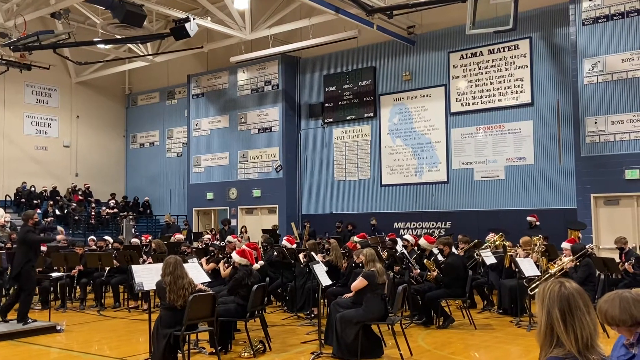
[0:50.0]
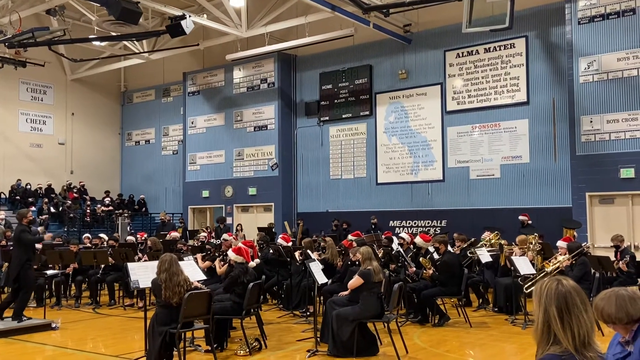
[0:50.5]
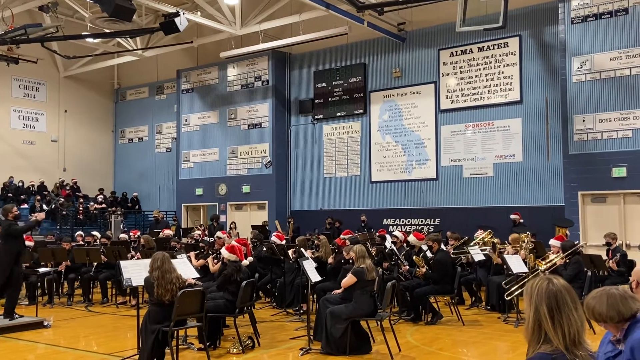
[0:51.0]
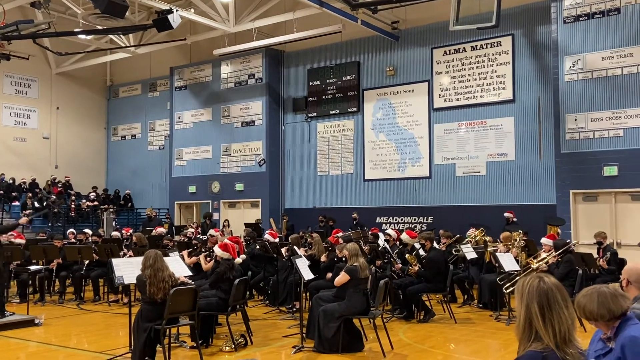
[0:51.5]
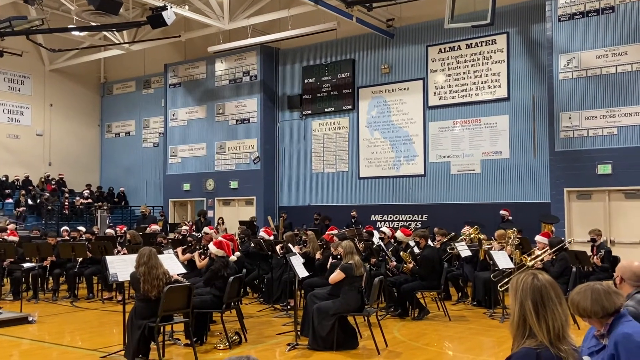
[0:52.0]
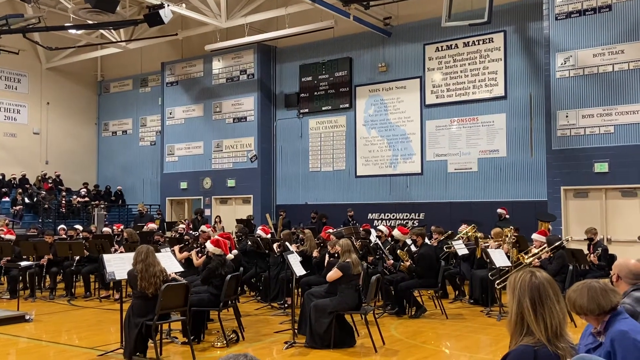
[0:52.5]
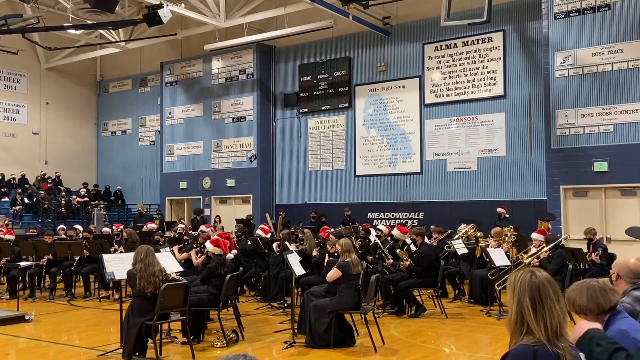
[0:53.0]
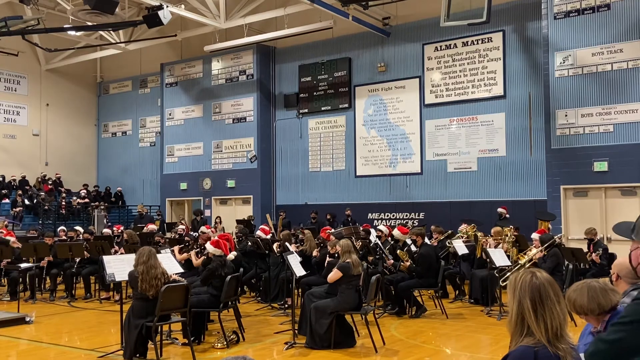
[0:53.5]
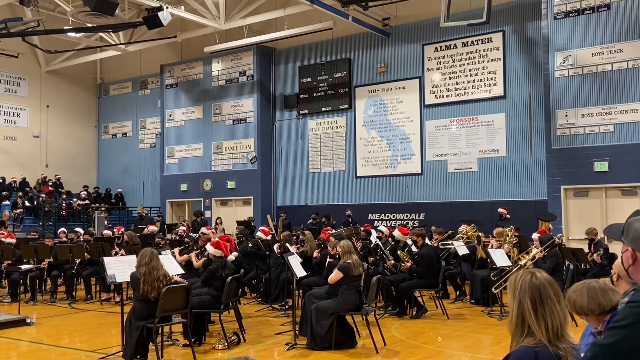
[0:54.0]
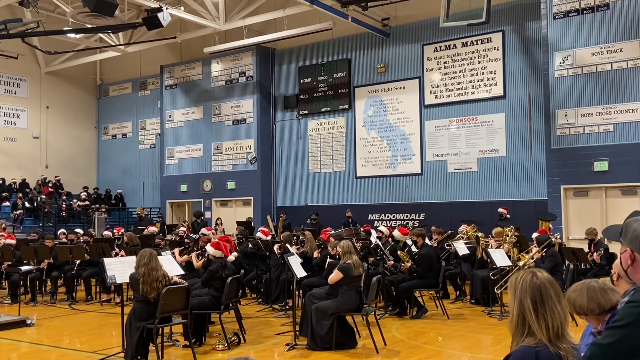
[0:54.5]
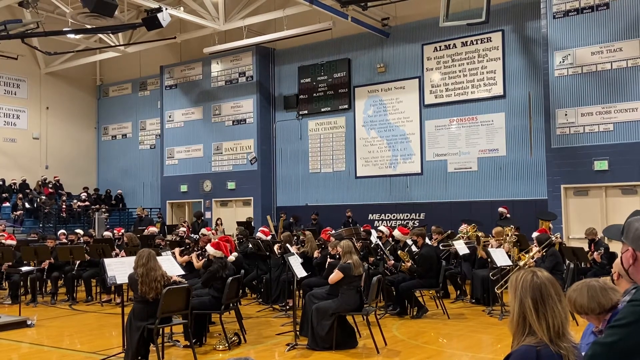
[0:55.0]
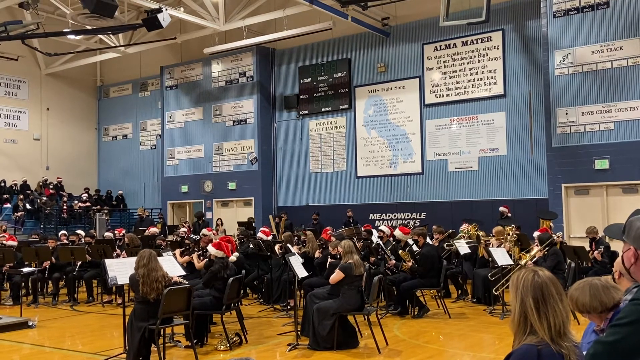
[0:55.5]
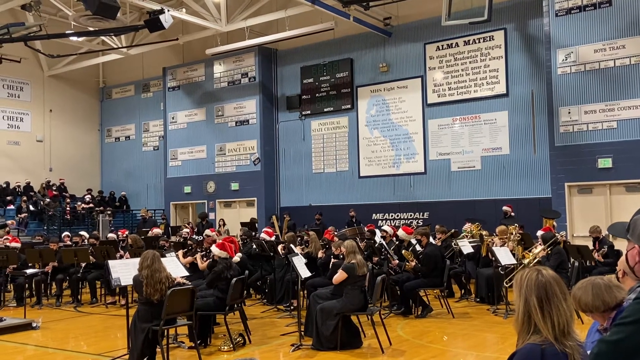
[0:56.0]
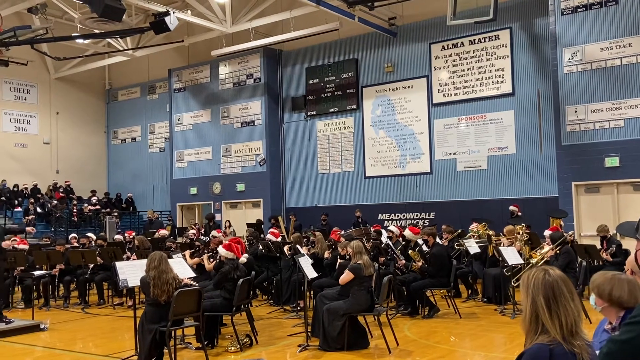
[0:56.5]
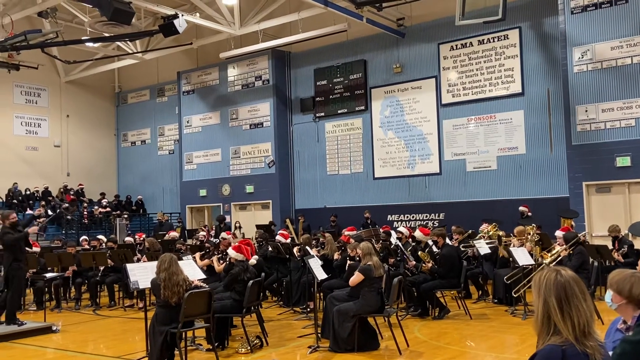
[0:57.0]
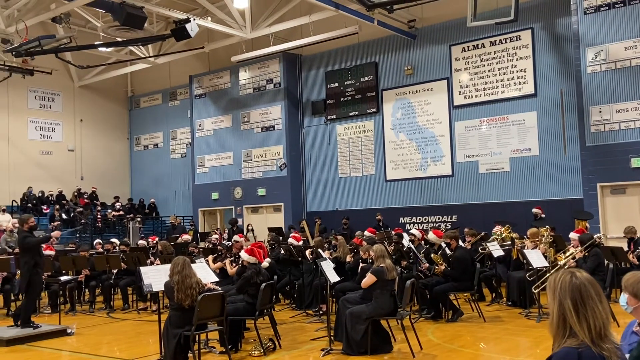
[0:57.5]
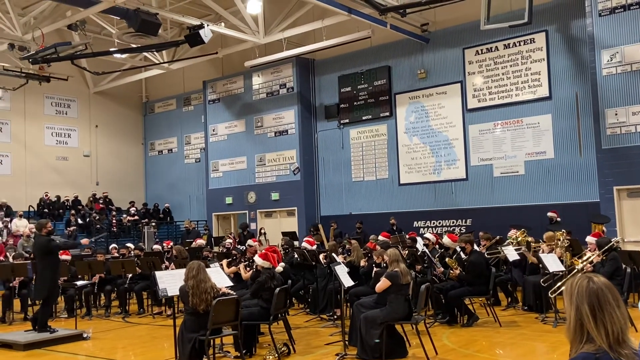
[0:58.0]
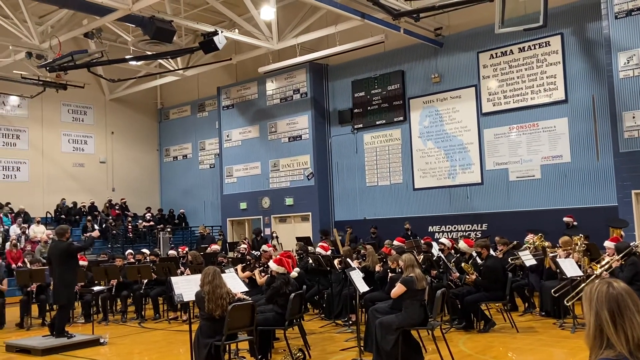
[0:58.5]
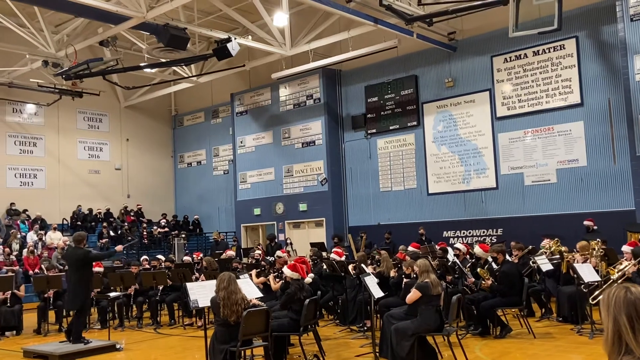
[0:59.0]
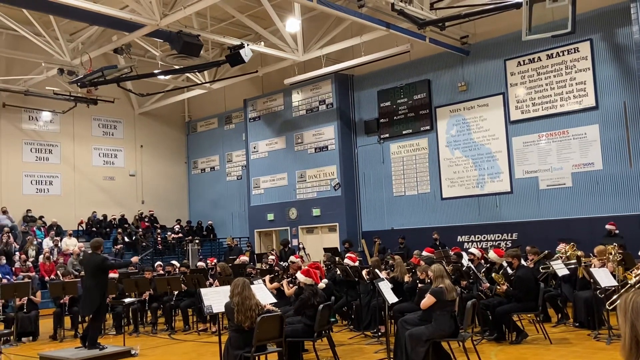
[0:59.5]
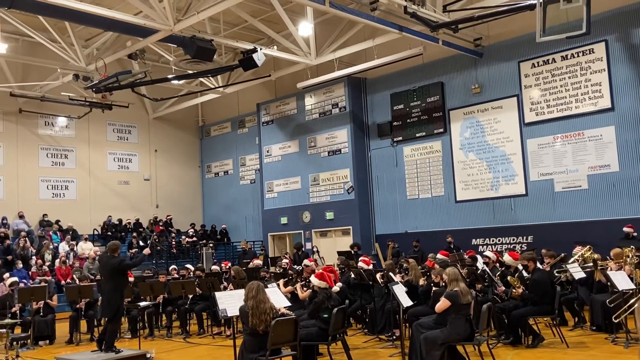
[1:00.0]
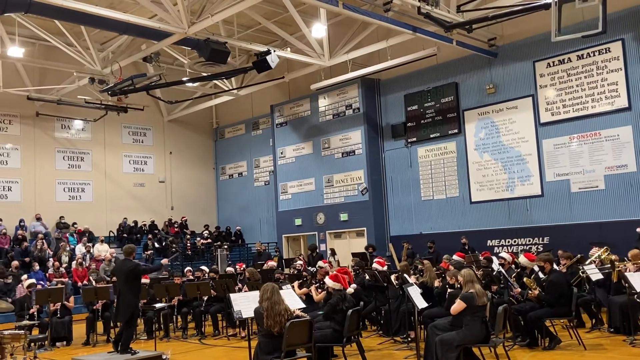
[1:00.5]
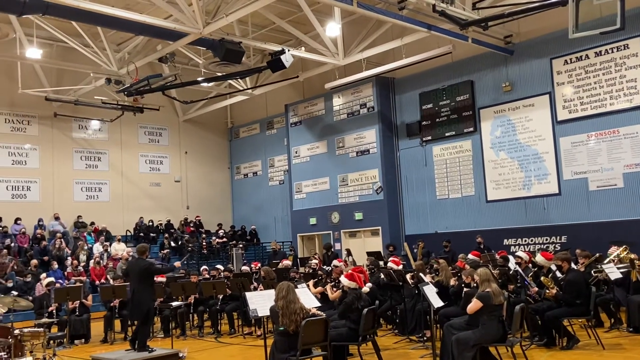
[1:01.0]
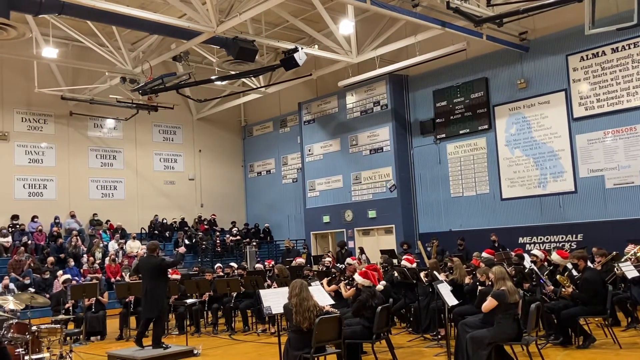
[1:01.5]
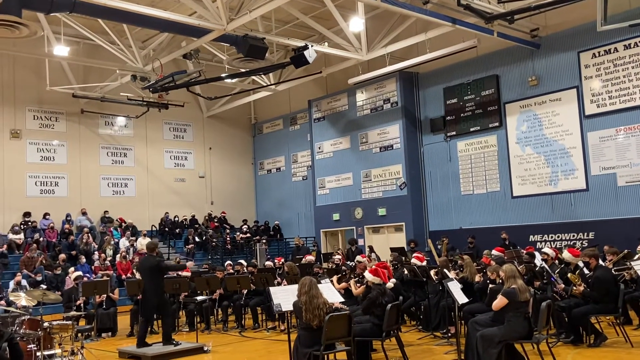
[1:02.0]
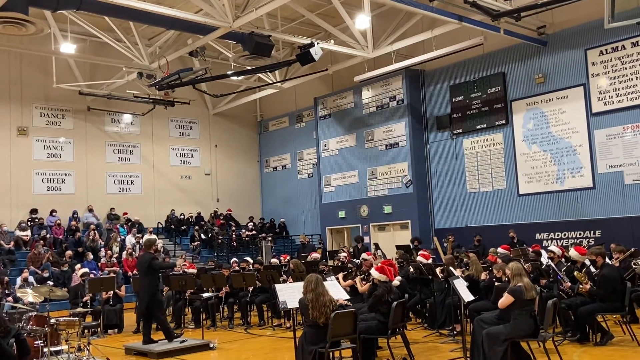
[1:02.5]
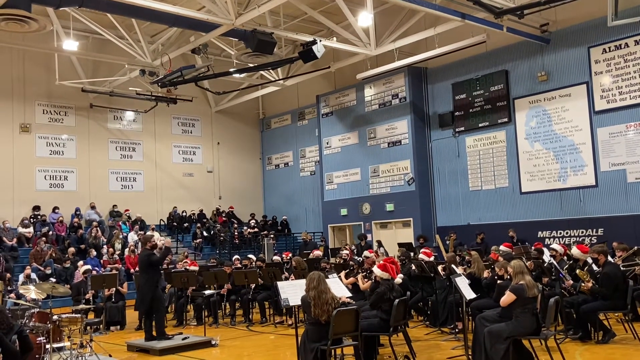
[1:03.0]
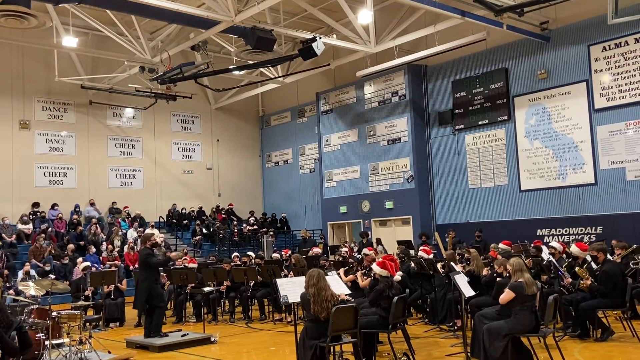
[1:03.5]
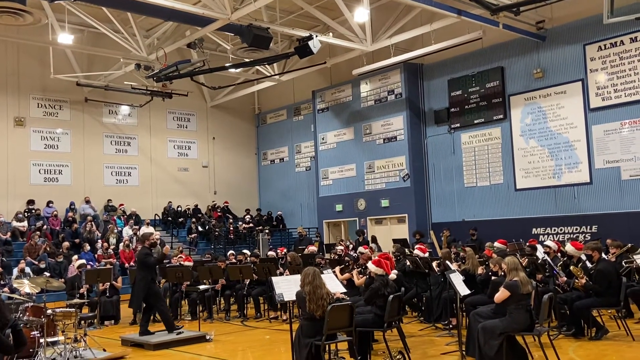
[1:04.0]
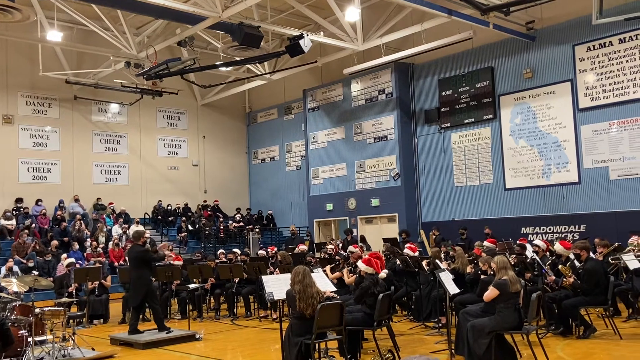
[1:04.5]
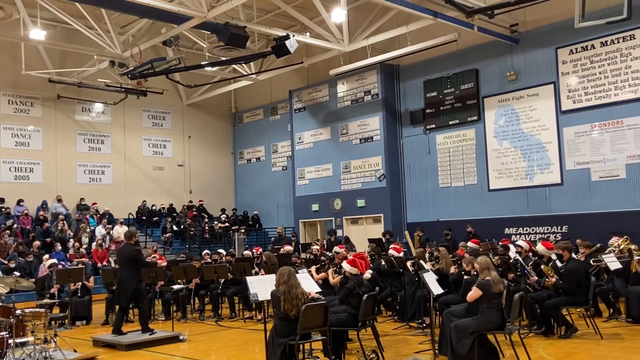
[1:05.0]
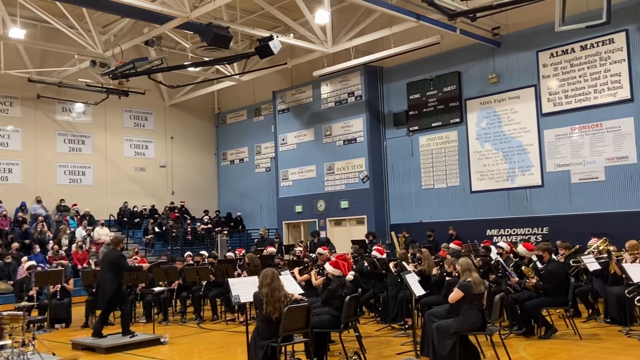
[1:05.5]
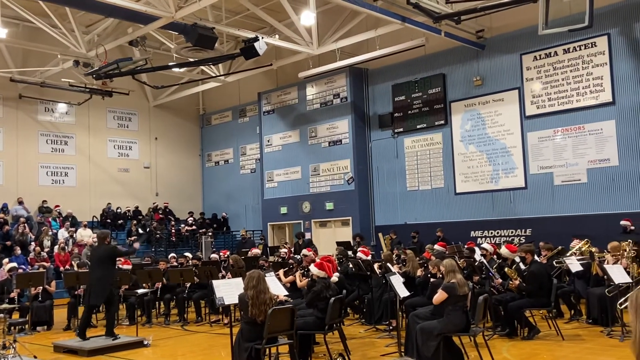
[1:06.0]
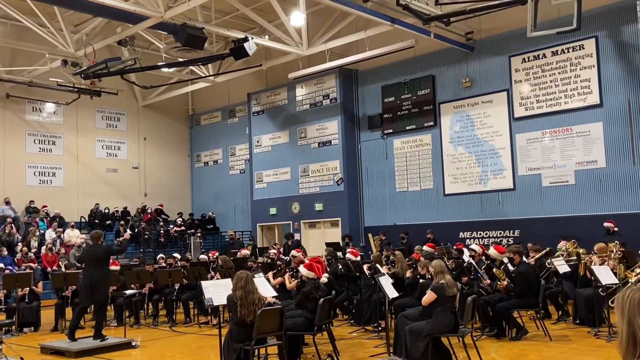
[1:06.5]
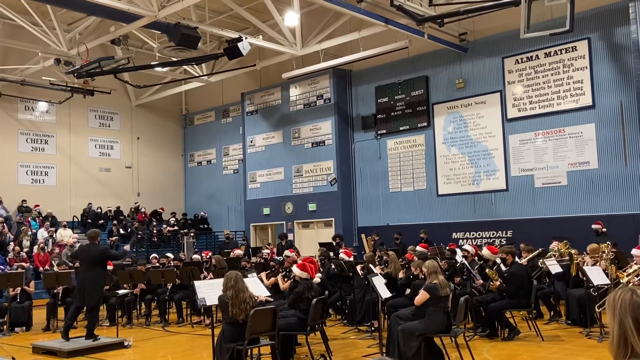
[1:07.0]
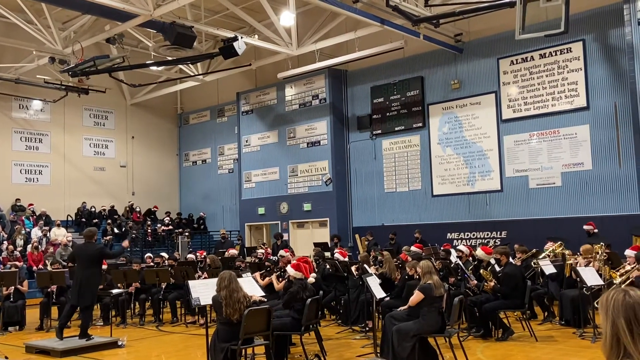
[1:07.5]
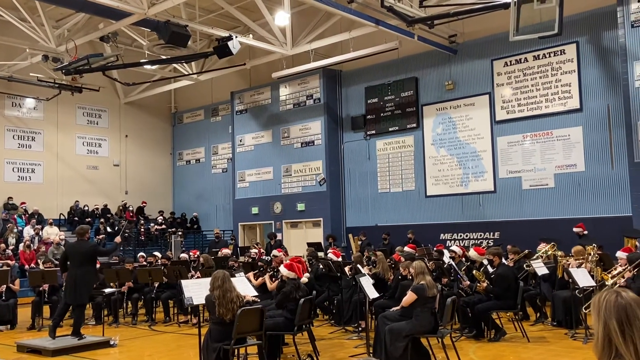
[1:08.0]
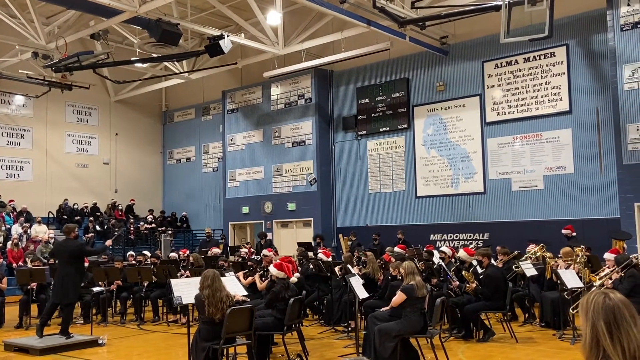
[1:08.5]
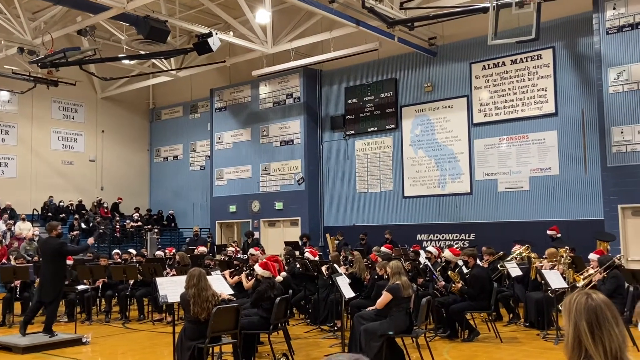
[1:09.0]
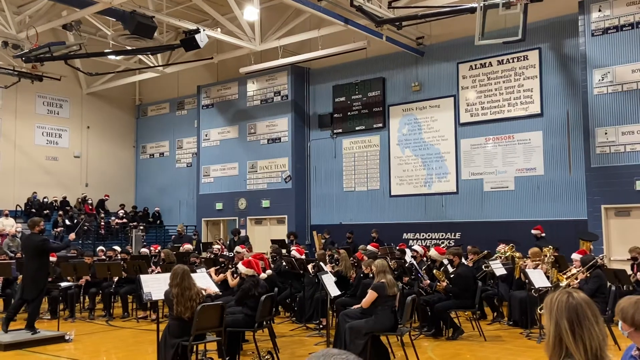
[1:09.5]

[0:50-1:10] The students are playing music on their instruments. To the right, a few more people sitting in the crowd are visible, including a lady with short hair wearing a mask. The camera moves a little to the left and then to the right. The students sit in black chairs on the shiny gym floor, which has lines painted on it, apparently to make a basketball court. They all wear black, some wear Santa hats, and they have stands in front of them with white pieces of paper. The conductor, dressed all in black, is standing on a little square stage a little bit off the ground. The camera moves back and forth slowly, showing the bluish-gray gym wall with many white signs on it, some bigger and some smaller.